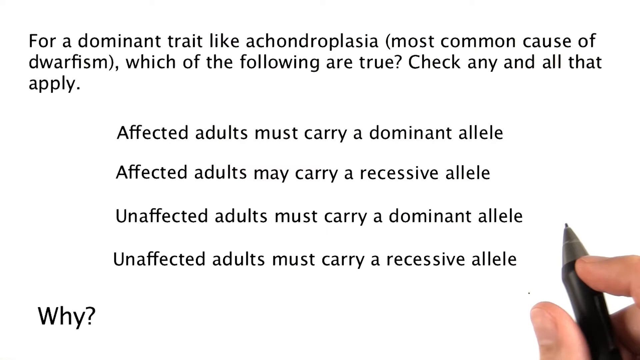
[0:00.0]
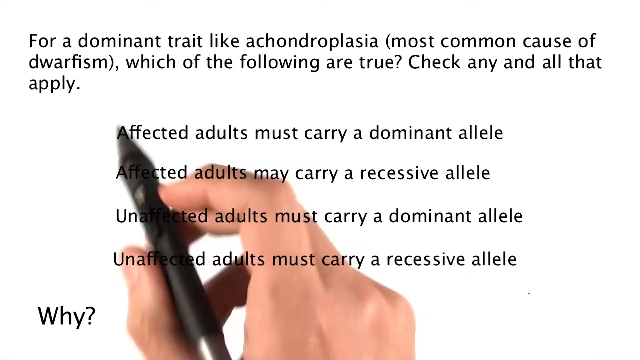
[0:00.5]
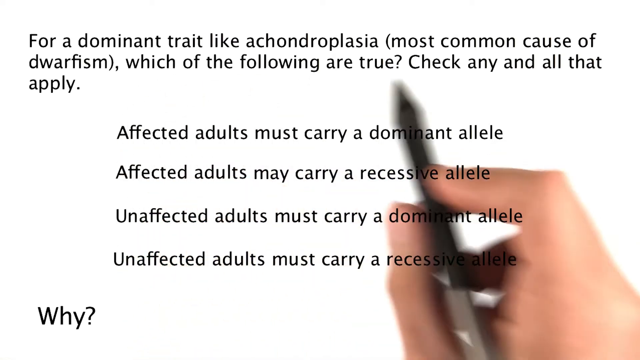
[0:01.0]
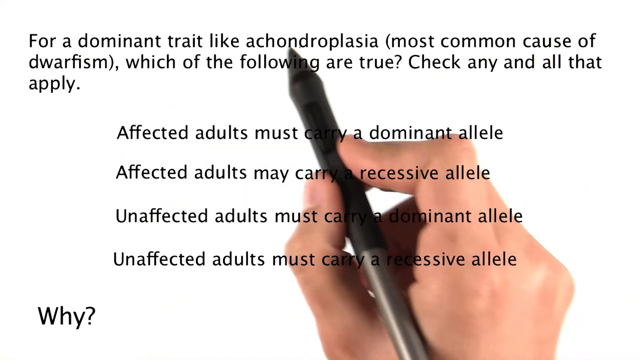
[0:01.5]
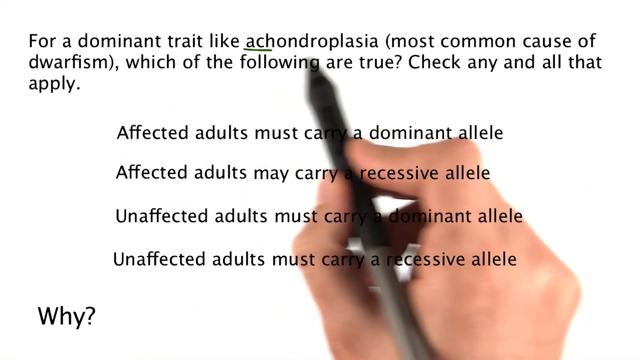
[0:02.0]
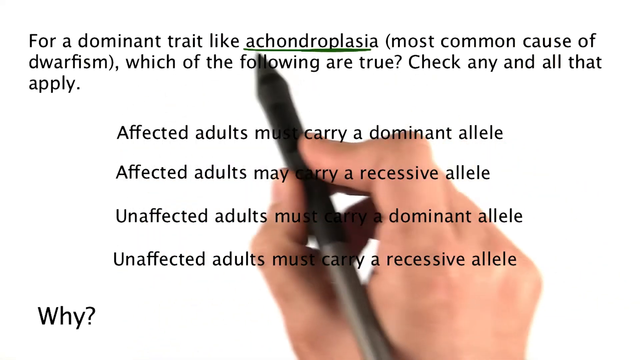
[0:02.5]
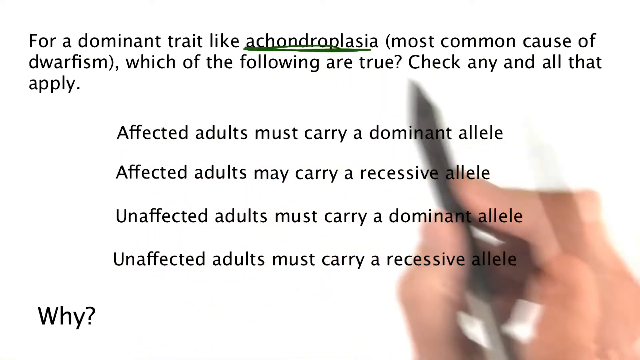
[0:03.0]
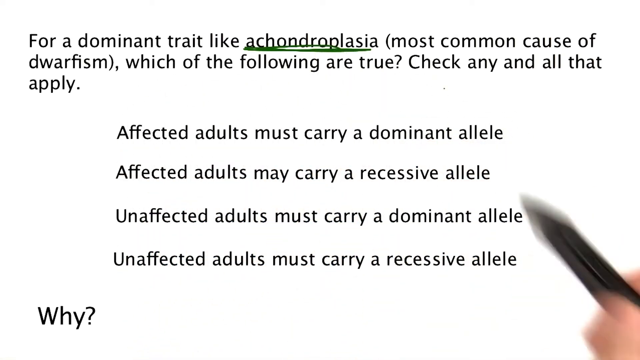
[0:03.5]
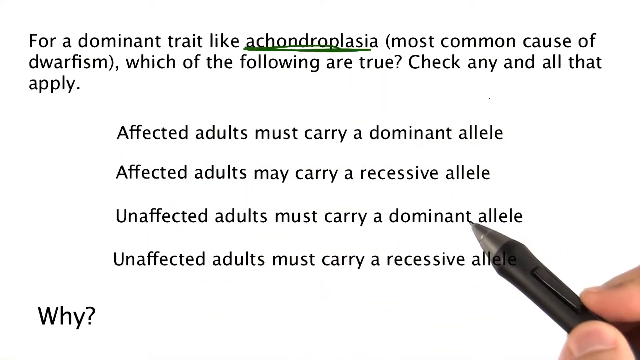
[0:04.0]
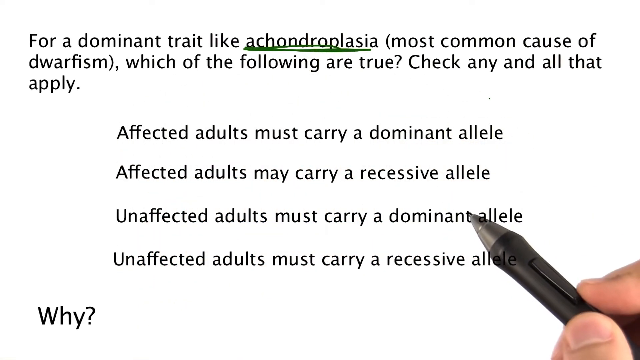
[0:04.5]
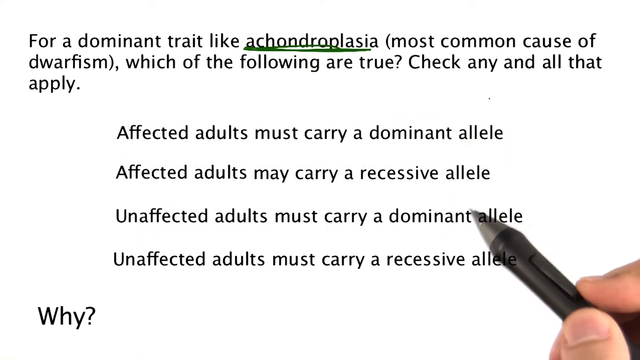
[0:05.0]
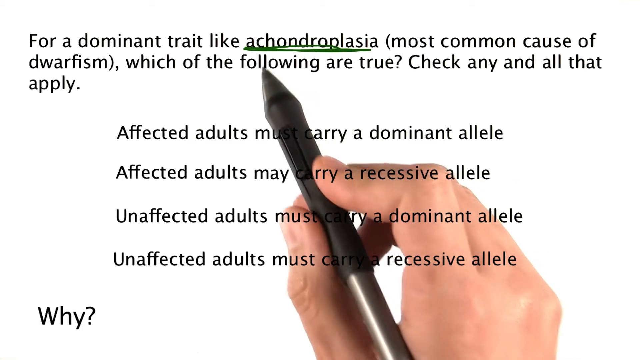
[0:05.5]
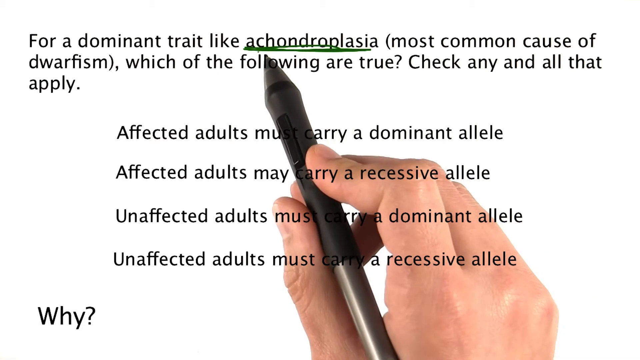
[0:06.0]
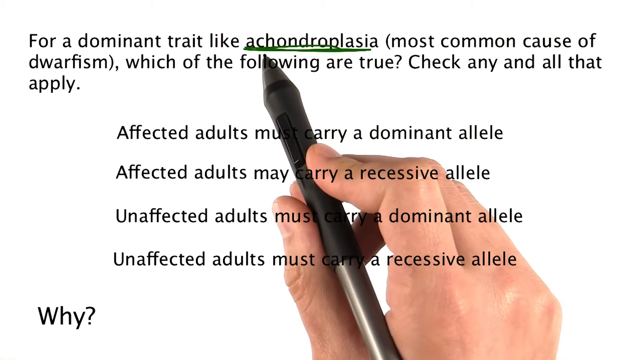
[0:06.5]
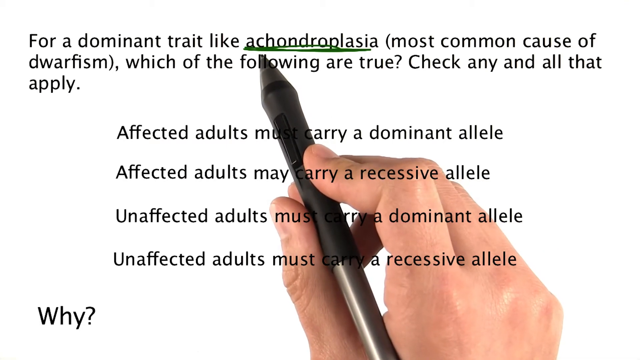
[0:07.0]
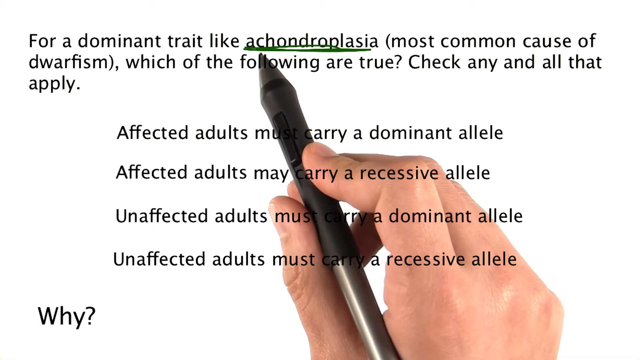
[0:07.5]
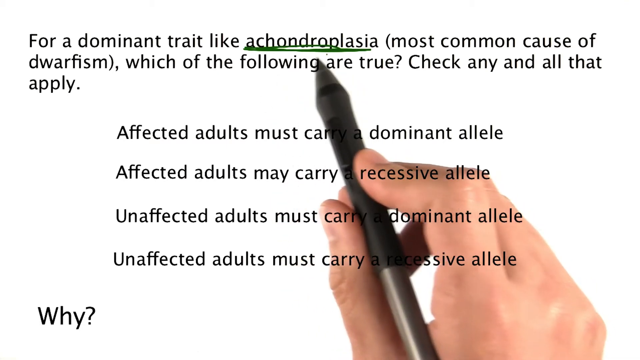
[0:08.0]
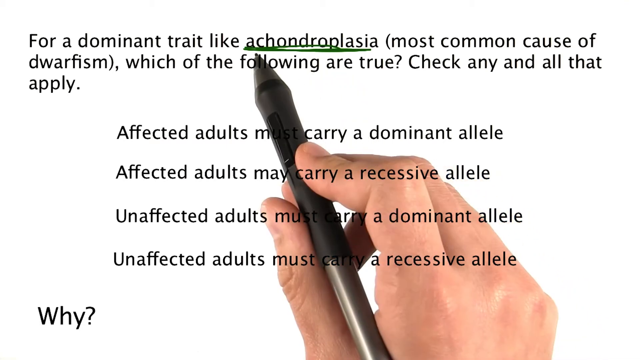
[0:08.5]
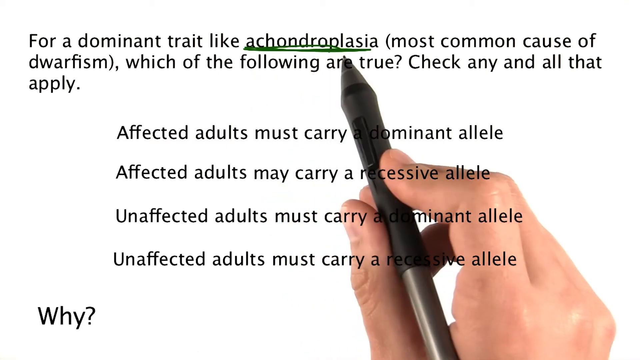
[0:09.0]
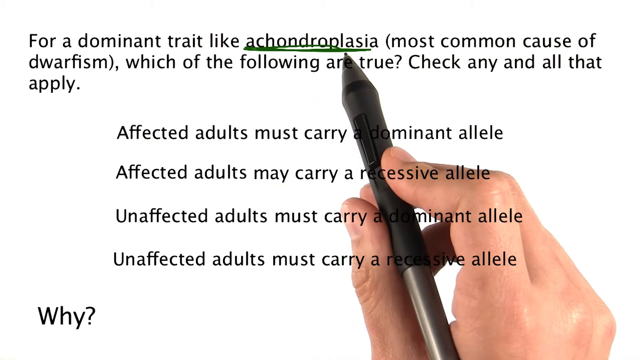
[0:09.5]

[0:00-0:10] A hand holding a black pen moves over written information. The text begins "for a dominant trait like achondroplasia," and the hand underlines "achondroplasia" with the pen, which writes in green. Four statements are written, two about affected adults and two about unaffected adults: "affected adults must carry a dominant allele," "affected adults must carry a recessive allele," "unaffected adults must carry a dominant allele," and "unaffected adults must carry a recessive allele." Down on the left-hand side there is a "y."